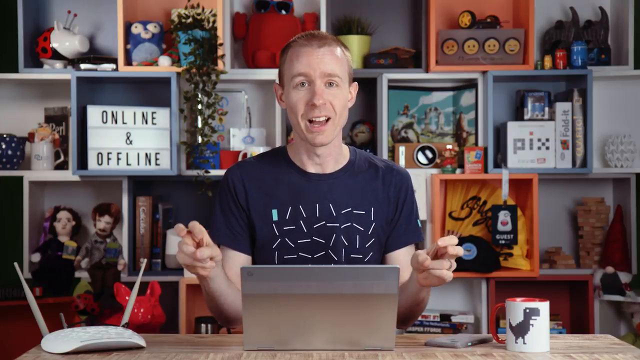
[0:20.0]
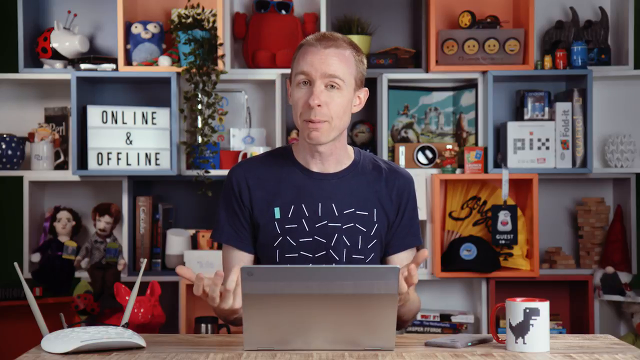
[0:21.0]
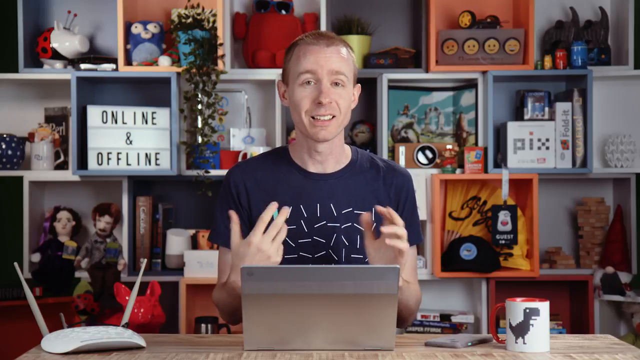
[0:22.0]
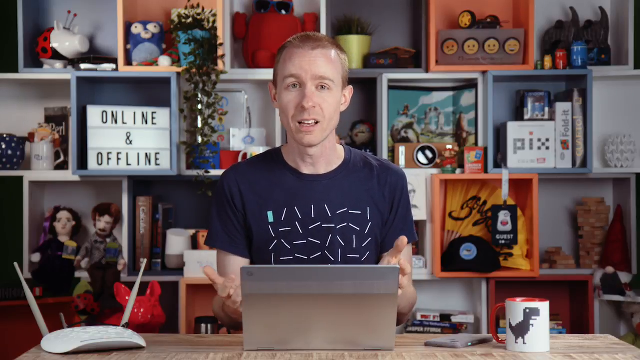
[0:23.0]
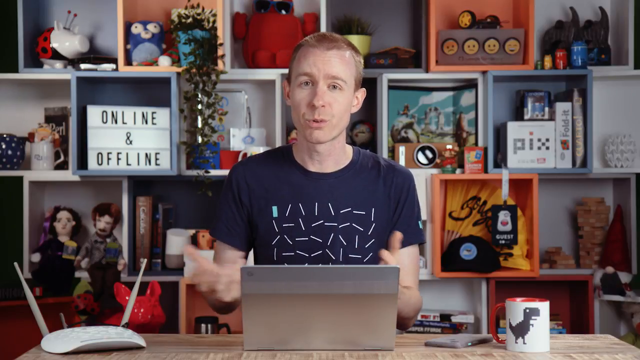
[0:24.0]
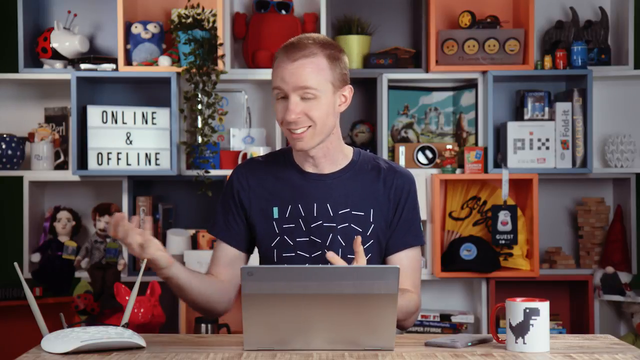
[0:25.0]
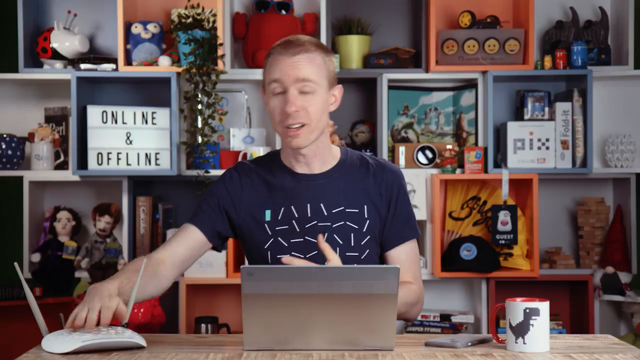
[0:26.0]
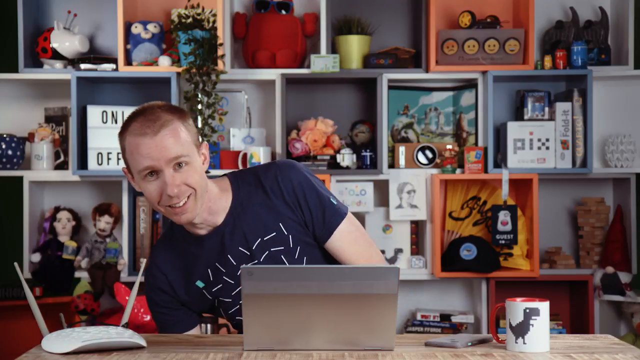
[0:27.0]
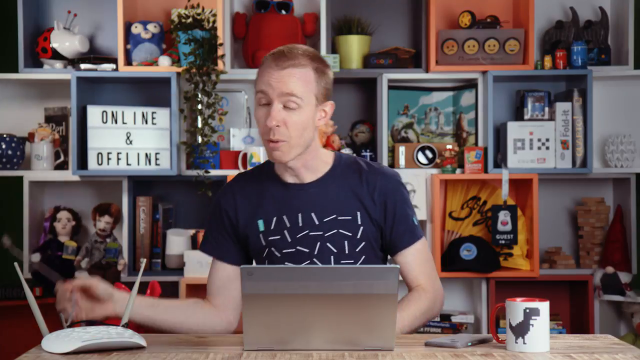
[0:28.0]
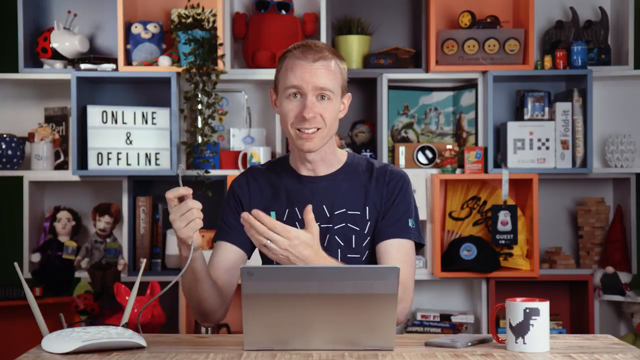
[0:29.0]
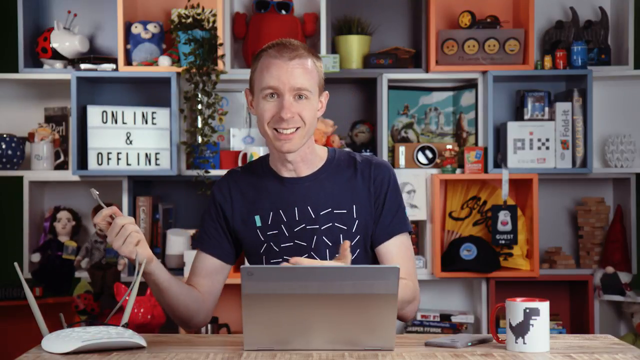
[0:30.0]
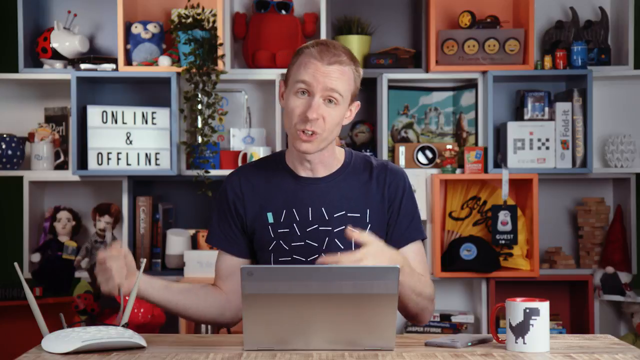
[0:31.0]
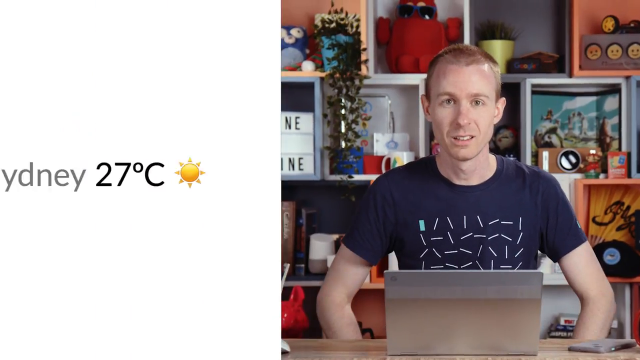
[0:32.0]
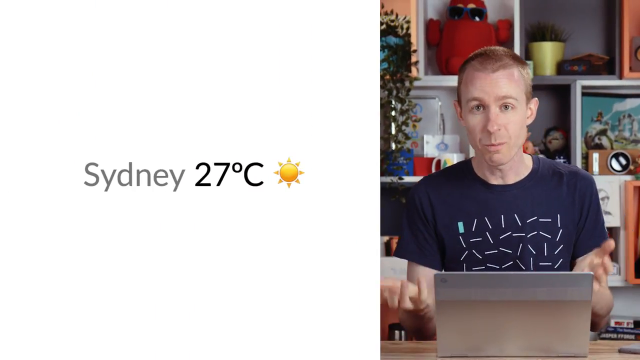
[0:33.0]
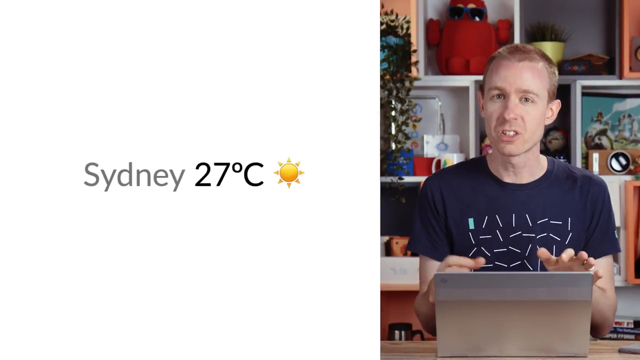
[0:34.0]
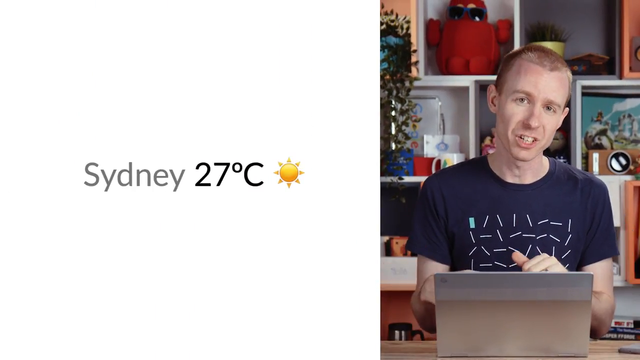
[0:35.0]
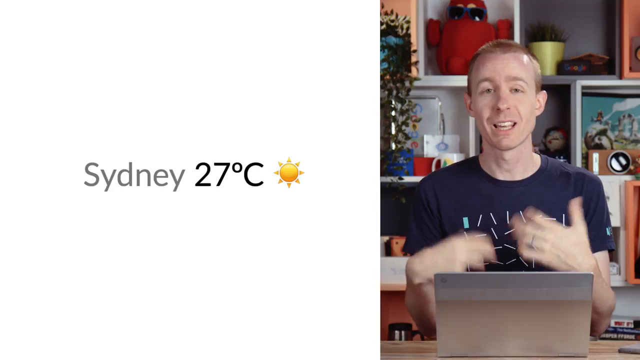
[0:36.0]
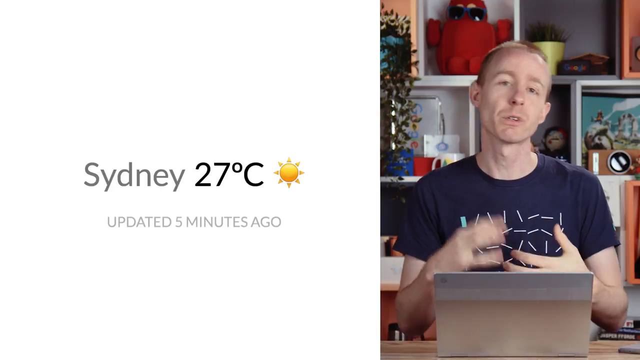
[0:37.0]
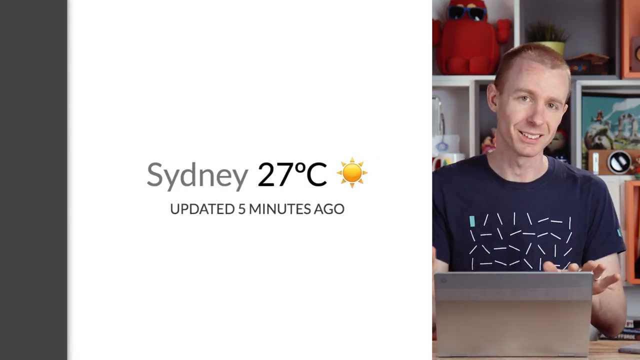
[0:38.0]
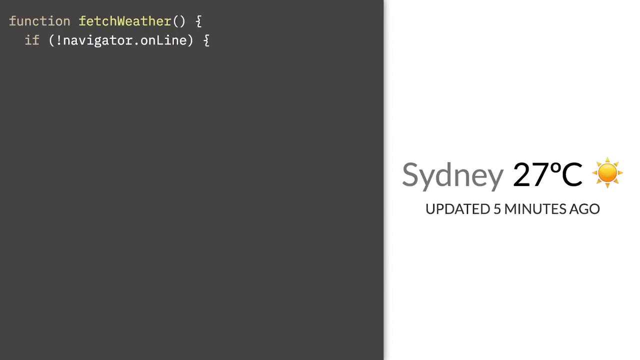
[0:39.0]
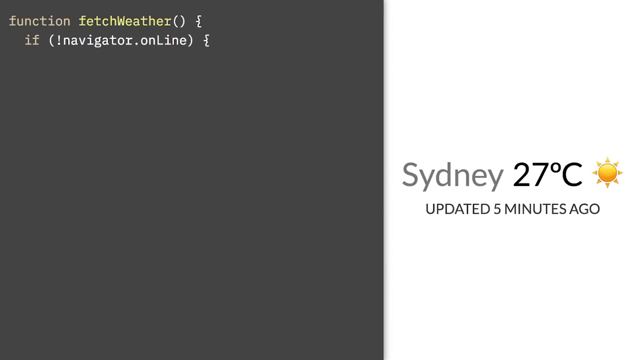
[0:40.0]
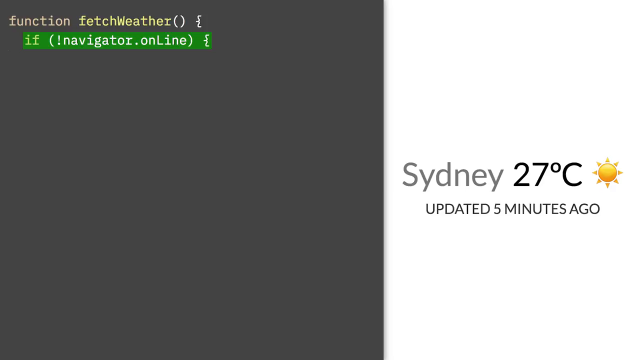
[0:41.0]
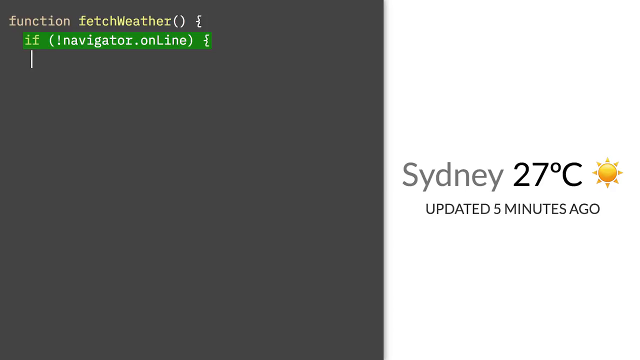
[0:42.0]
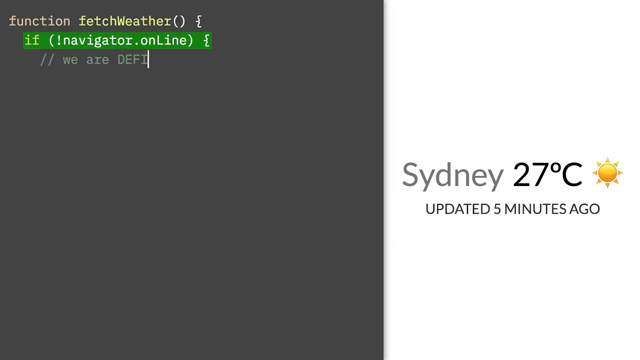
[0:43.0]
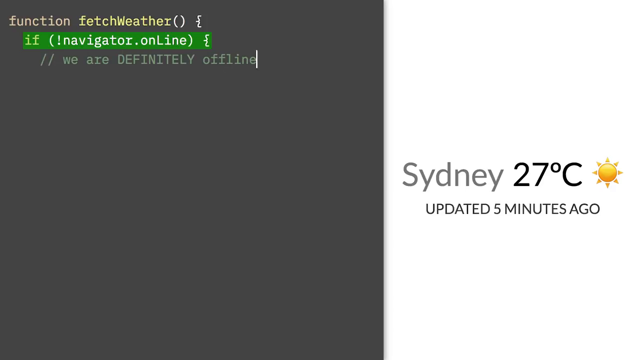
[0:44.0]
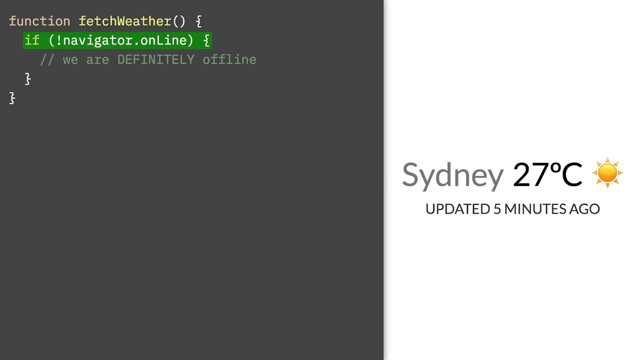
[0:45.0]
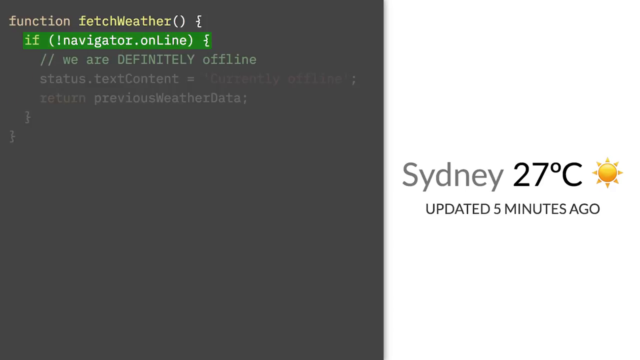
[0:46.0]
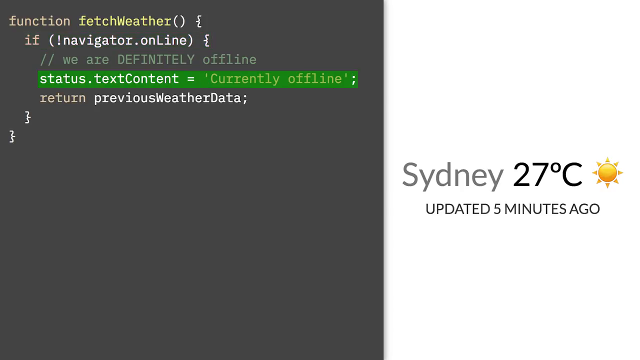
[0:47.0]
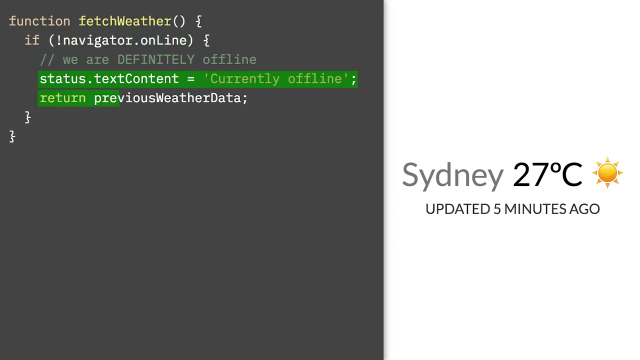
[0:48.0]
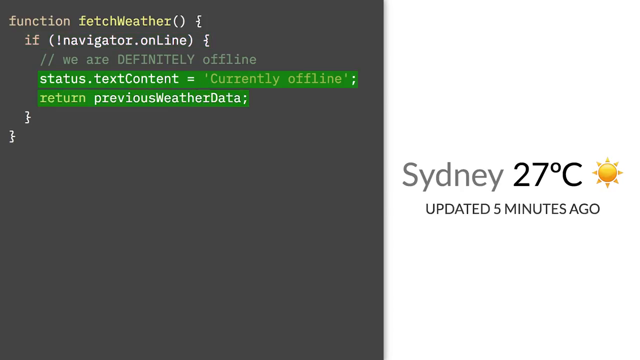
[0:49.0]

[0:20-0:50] The man keeps talking to the camera, gesturing rapidly with his hands. He reaches down toward the left side of the screen and pulls a gray cord, holding it in his right hand while his left hand gestures as he talks. Still gripping the cord with his right hand, he apparently puts it under the desk. The screen then splits: the left side is a blank white screen reading "Sydney 27 degrees Celsius" with a sun emoji to the right of it, and the right side still shows the man talking with hand motions. Below, it says "updated five minutes ago." The left side of the screen moves to the right, and the left side becomes a dark gray screen with two coding options, where "we are definitely offline" is typed. Two more lines of text below that are highlighted in green.